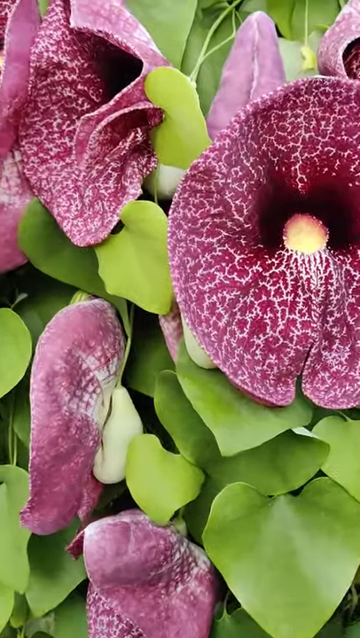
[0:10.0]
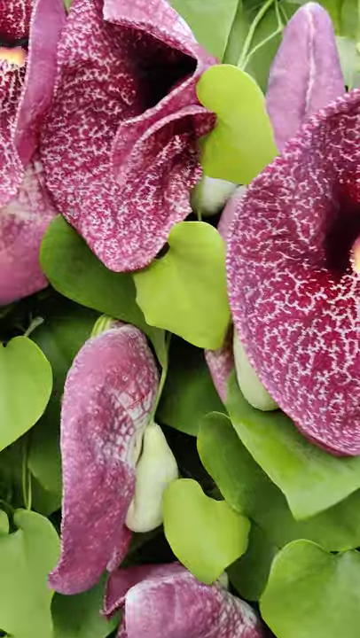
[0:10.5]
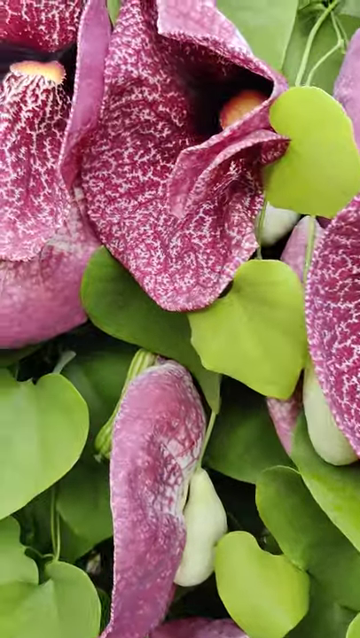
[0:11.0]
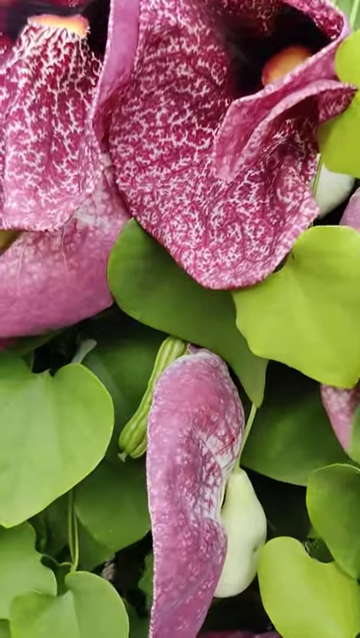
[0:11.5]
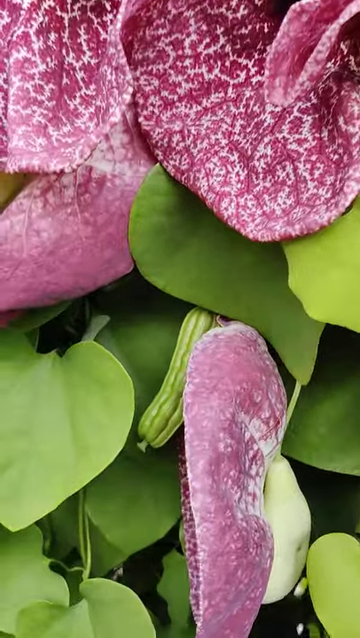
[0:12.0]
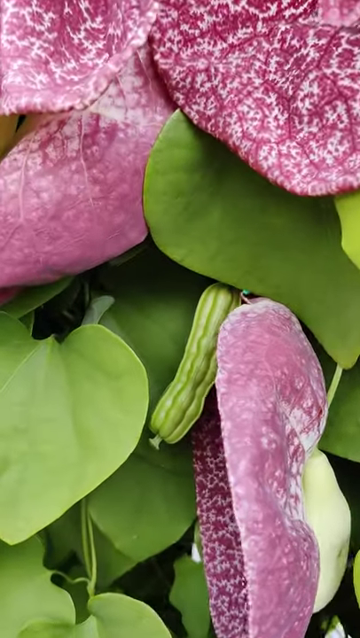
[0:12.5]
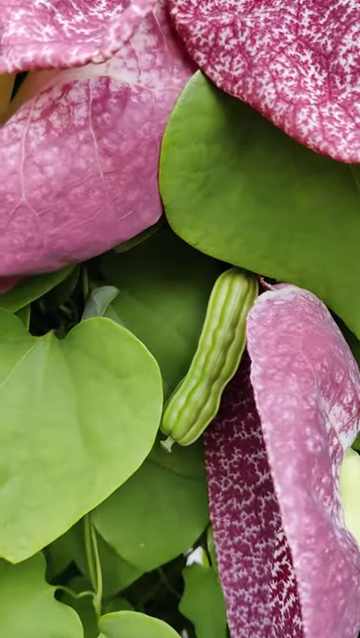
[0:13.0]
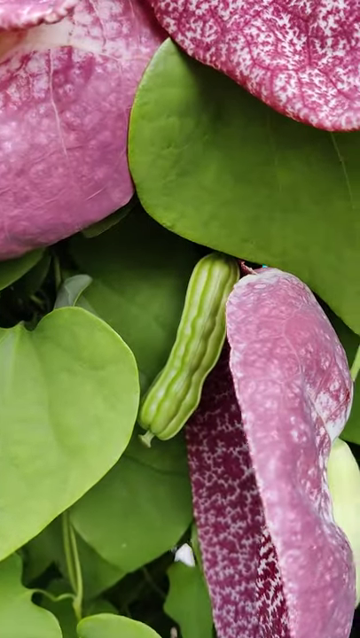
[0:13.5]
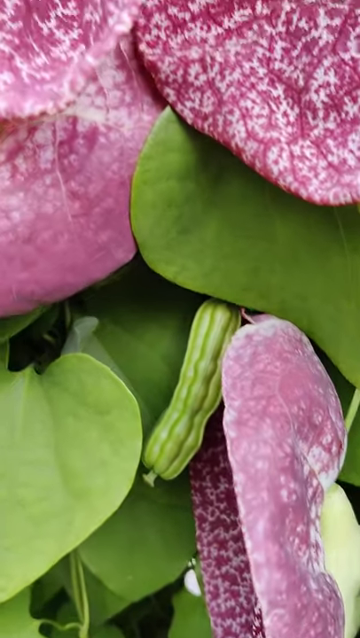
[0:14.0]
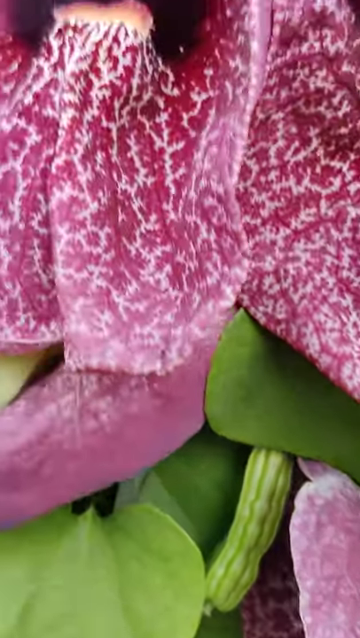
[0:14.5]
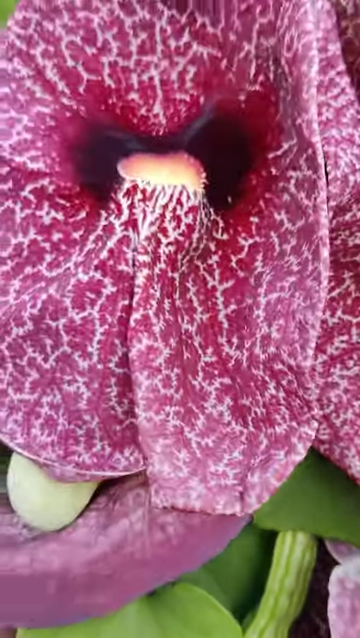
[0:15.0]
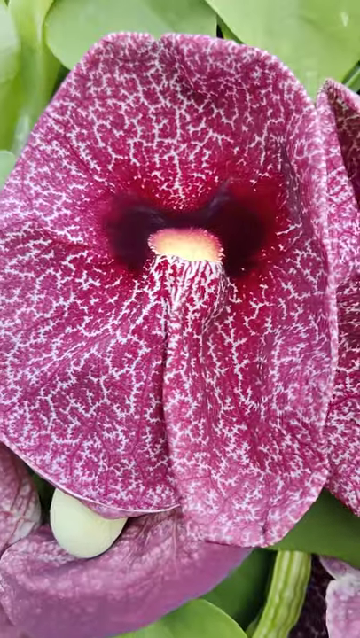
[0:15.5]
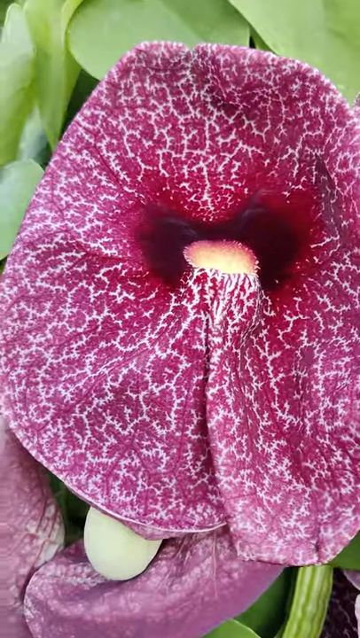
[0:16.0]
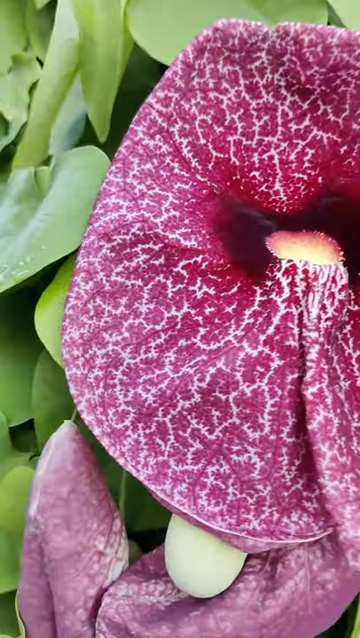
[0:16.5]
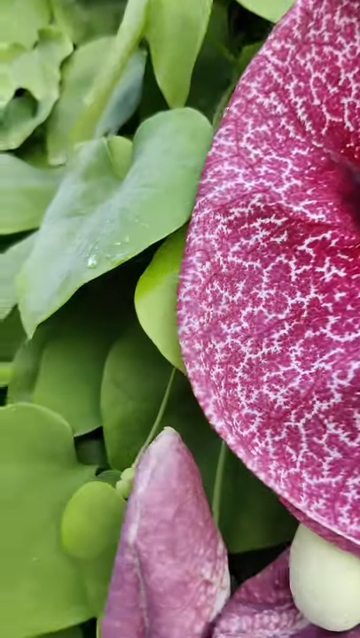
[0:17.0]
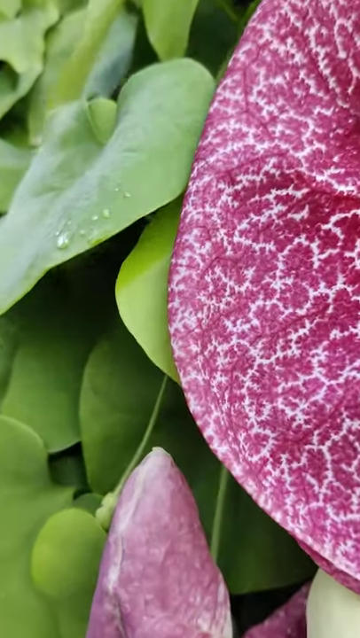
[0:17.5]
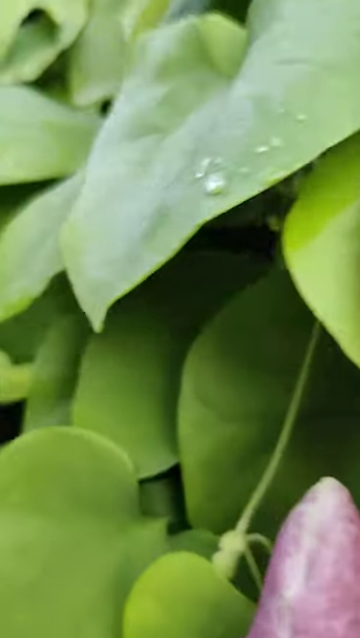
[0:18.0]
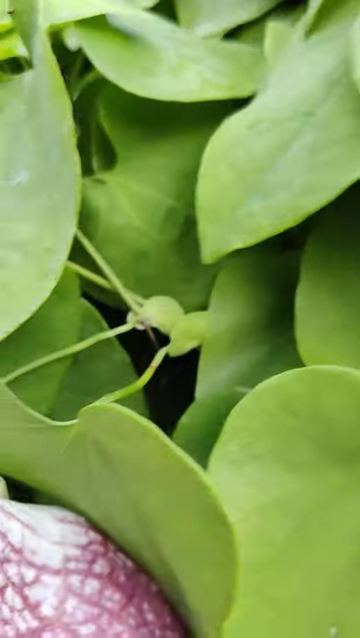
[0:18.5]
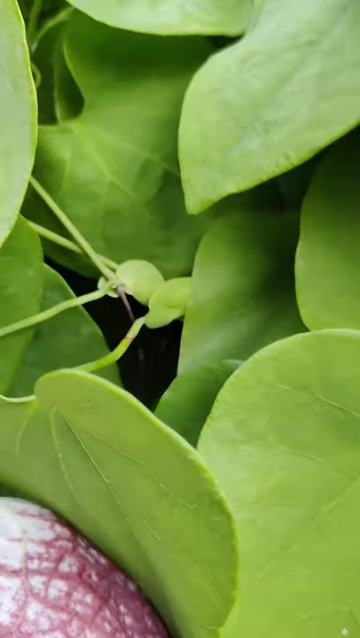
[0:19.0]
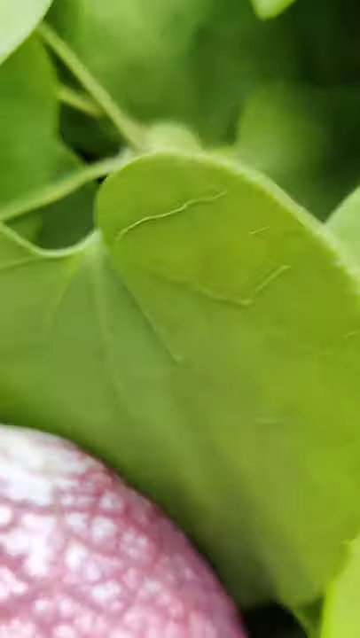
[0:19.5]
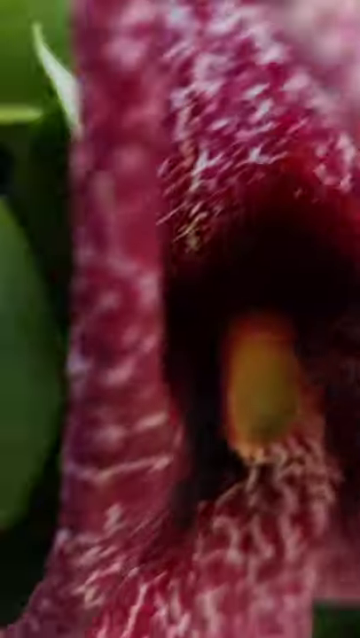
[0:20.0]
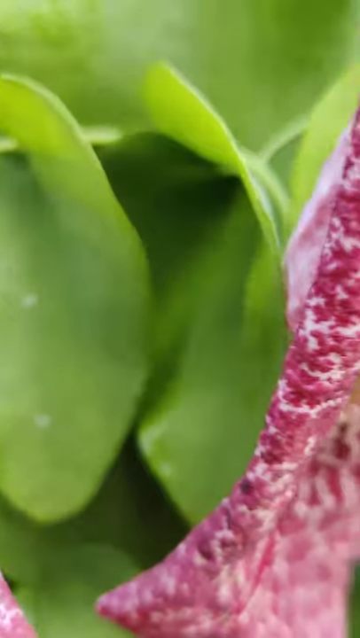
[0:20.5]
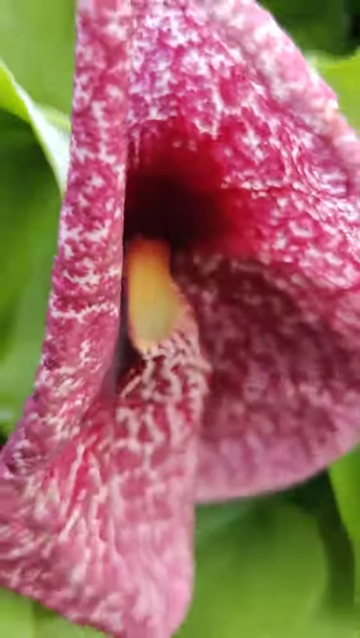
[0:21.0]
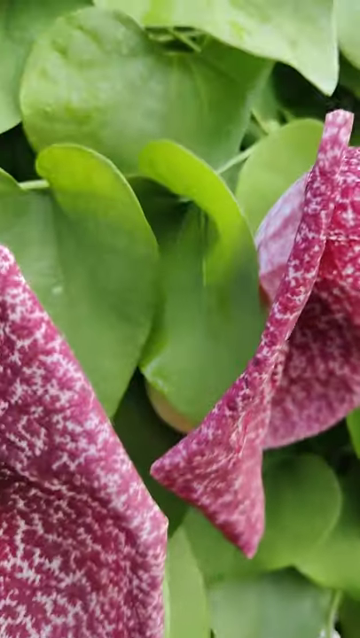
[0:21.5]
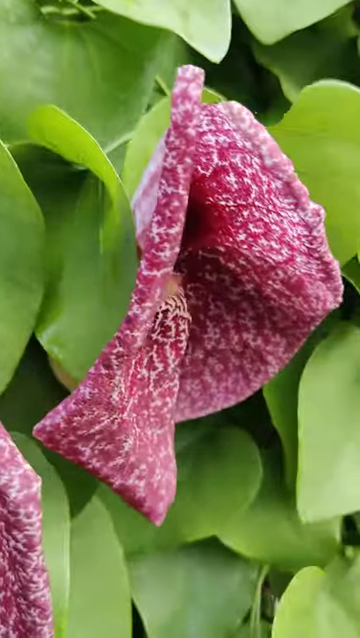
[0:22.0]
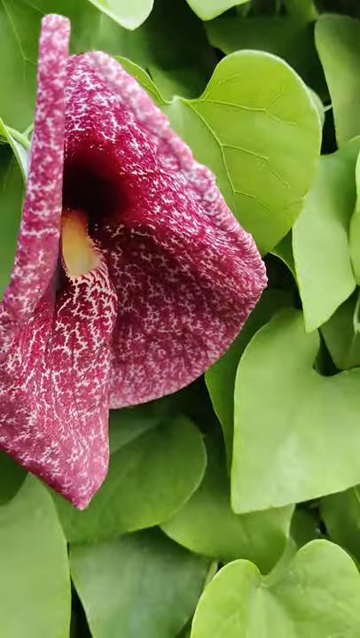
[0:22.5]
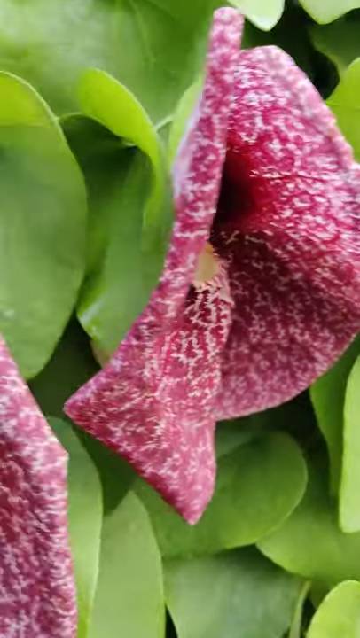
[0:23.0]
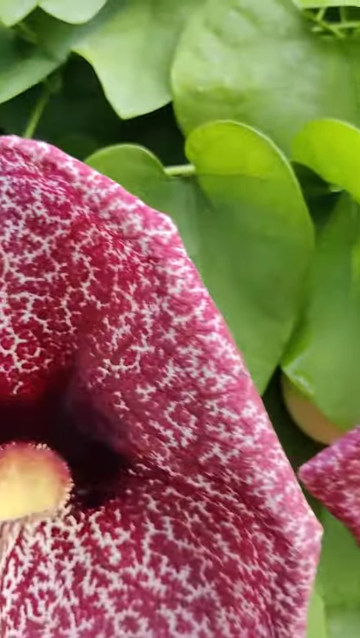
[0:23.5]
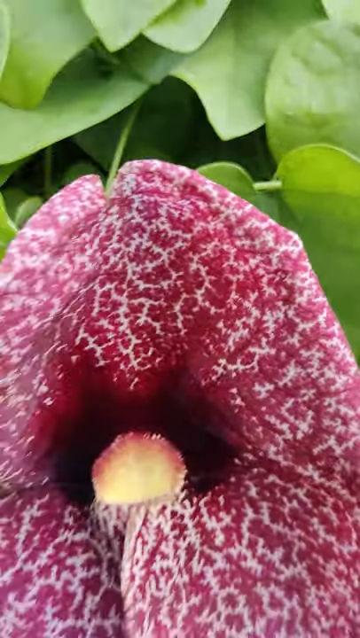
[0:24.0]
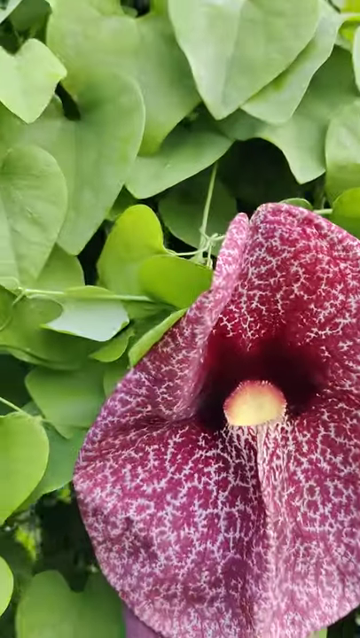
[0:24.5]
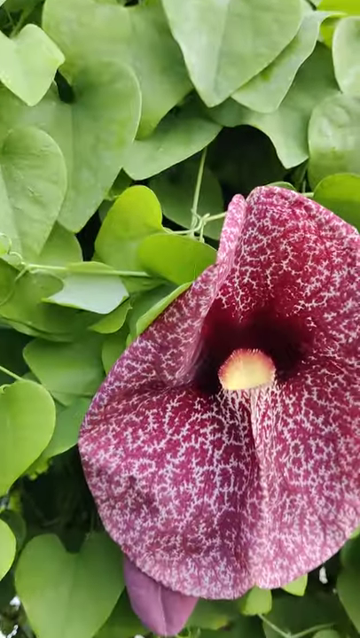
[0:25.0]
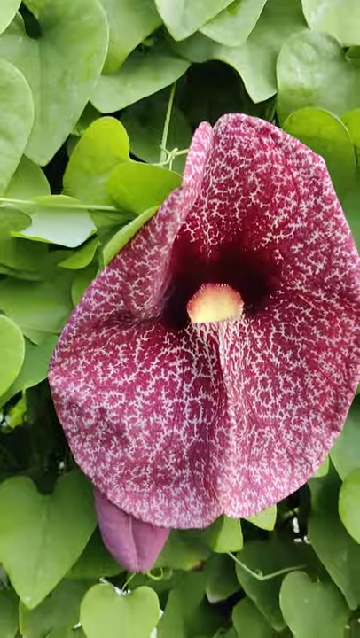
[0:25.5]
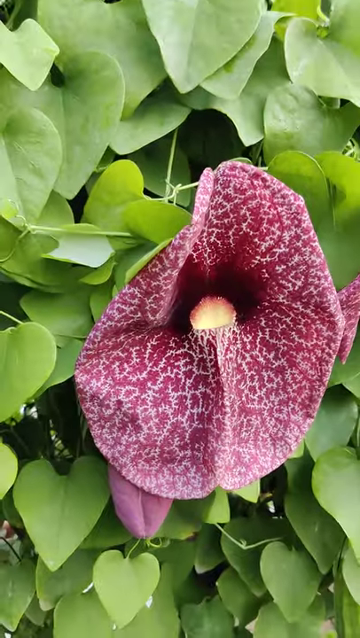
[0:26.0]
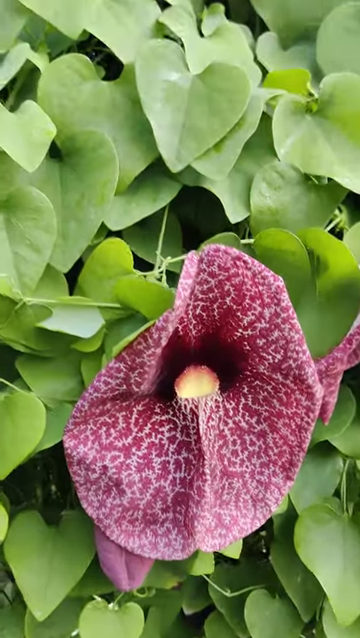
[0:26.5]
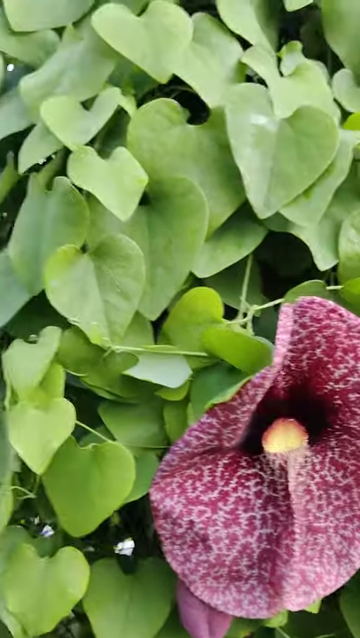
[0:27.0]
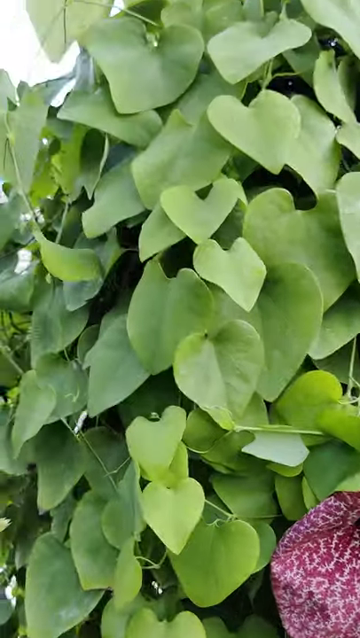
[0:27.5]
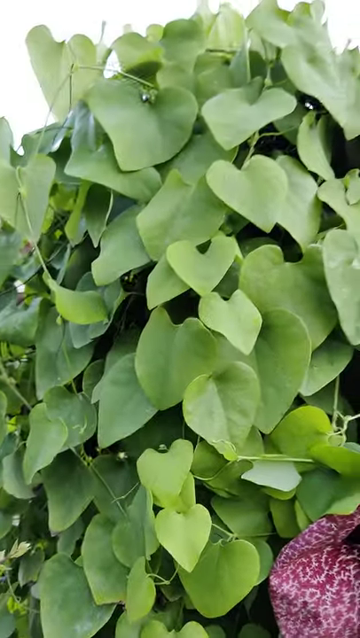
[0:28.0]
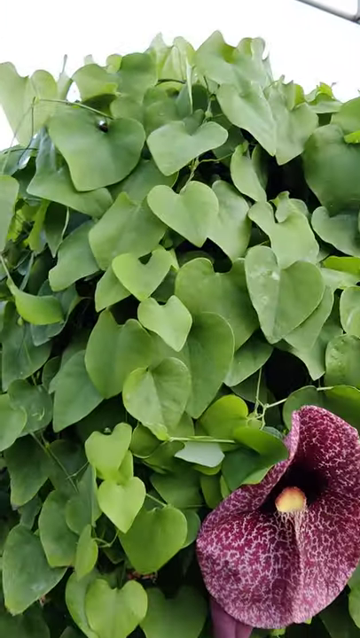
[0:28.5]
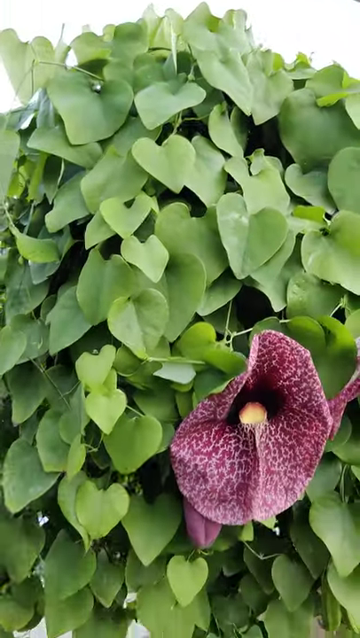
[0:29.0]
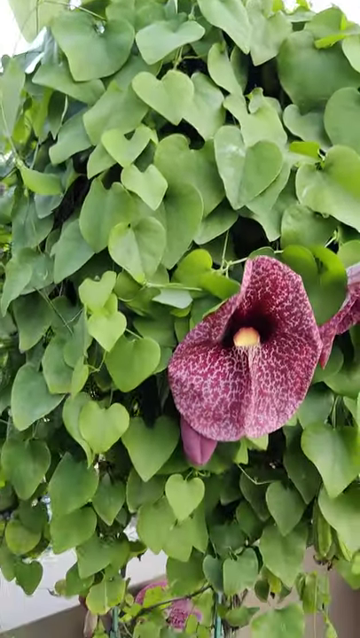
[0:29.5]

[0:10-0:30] The strange-looking flower is a reddish, watermelon-like color, pinkish red, almost burgundy. There is a lot of green from the leaves, and what looks like some type of fruit, though it is unclear, is growing underneath it. More leaves appear as the camera moves, pointing toward more leafy green, and then it goes back to one of the large red leaves. It could be a fruit tree of some type outside a home, though this is uncertain. The view is all green, and green things growing on the side look almost like a pickle or a cucumber. It seems to be a mixture of a few plants. The red-pink flower-looking item kind of looks like an organ in a body.